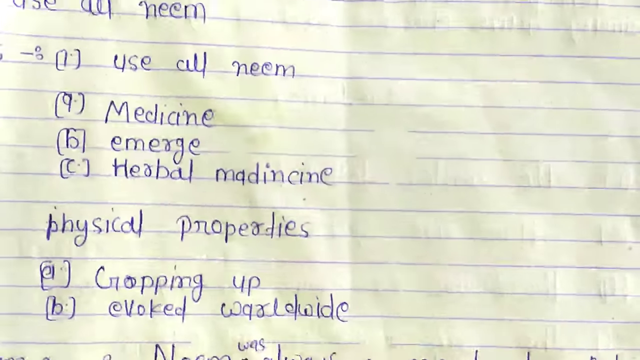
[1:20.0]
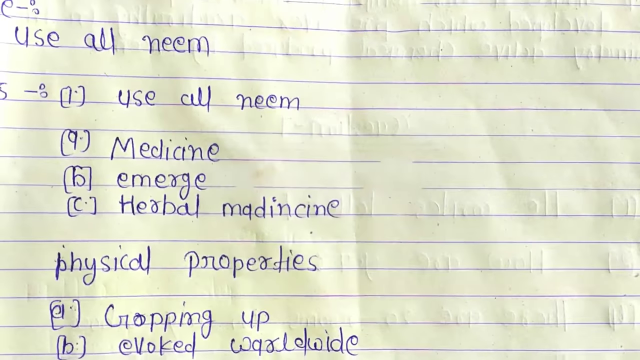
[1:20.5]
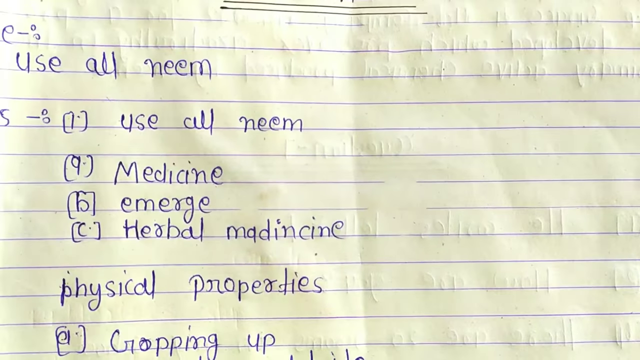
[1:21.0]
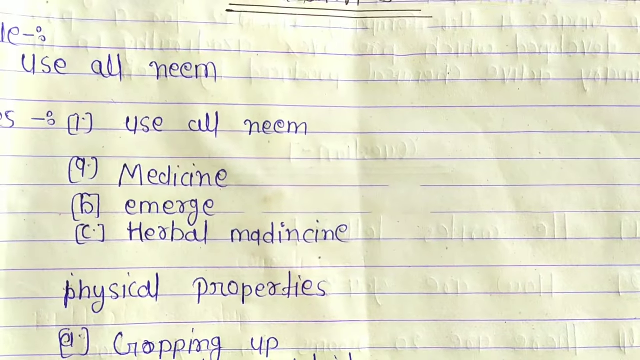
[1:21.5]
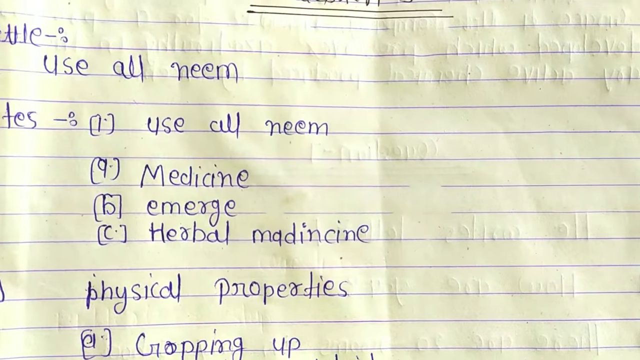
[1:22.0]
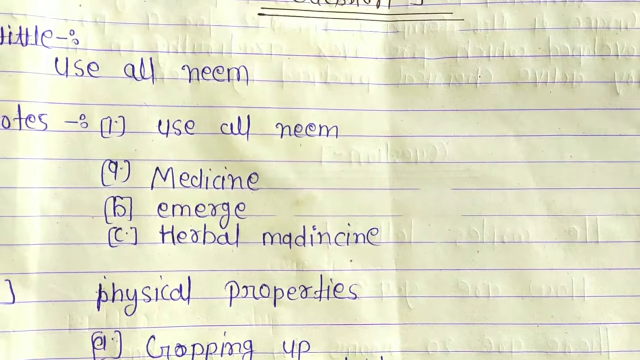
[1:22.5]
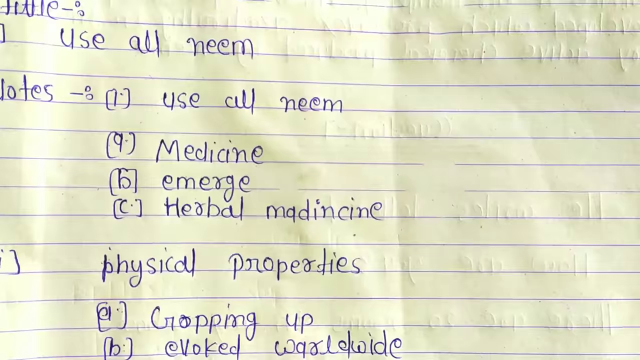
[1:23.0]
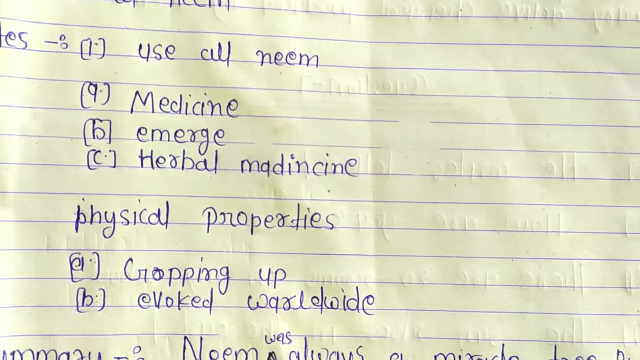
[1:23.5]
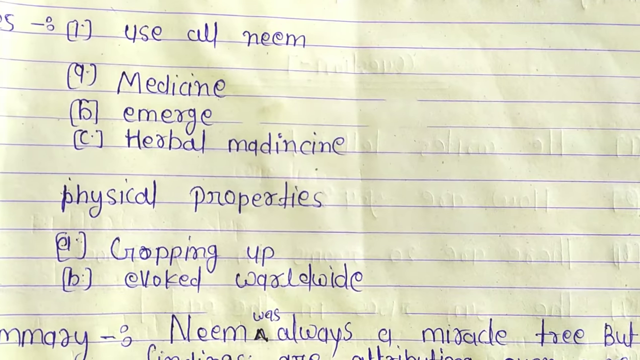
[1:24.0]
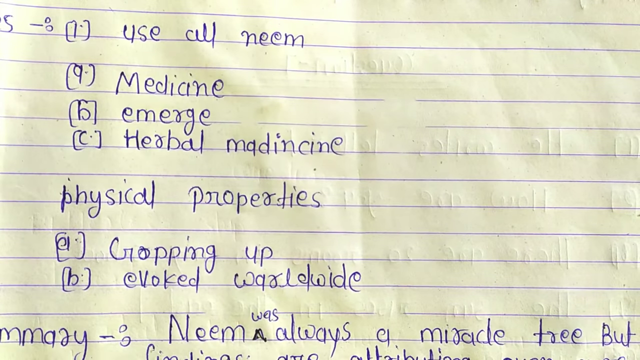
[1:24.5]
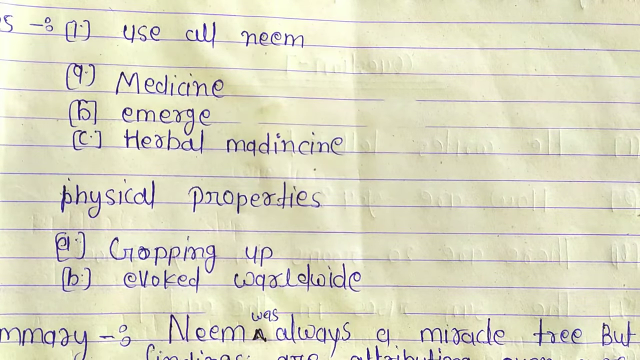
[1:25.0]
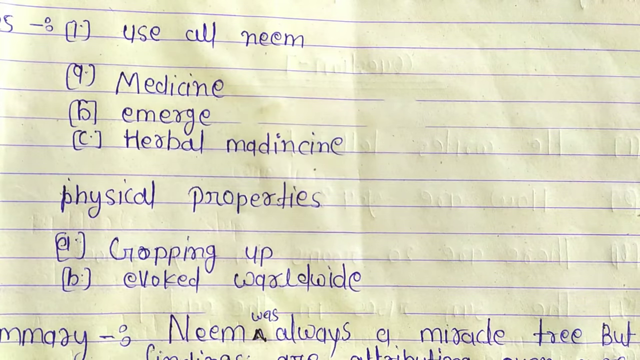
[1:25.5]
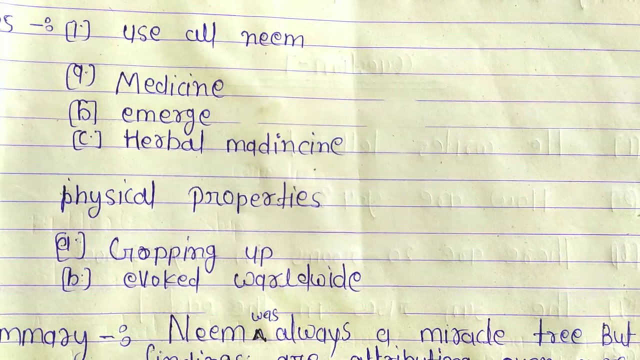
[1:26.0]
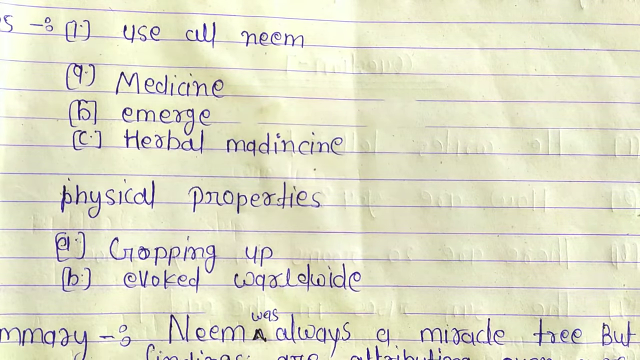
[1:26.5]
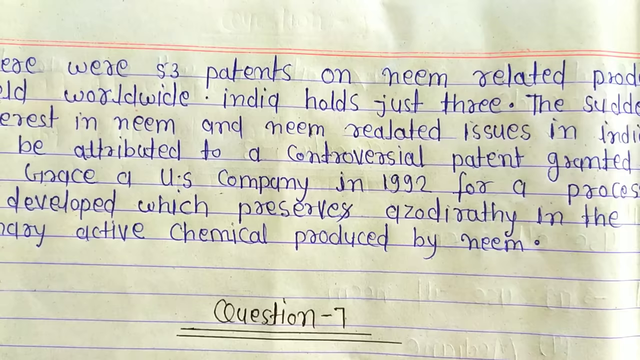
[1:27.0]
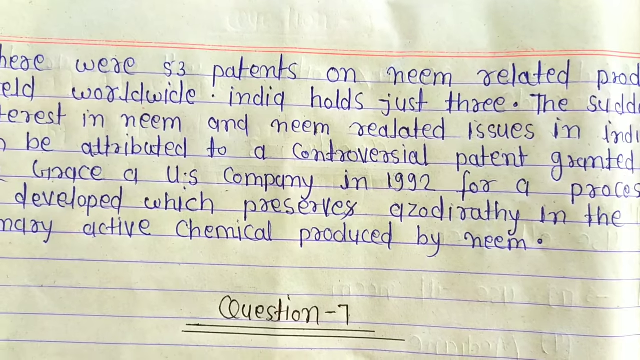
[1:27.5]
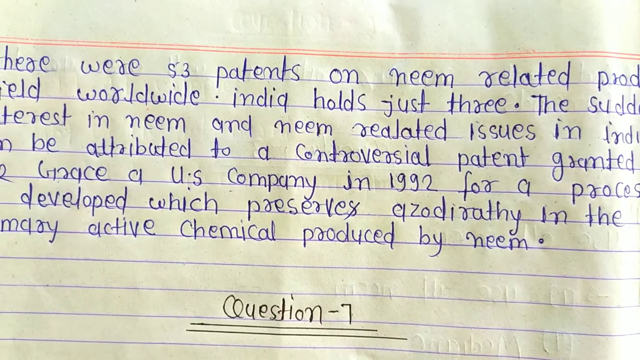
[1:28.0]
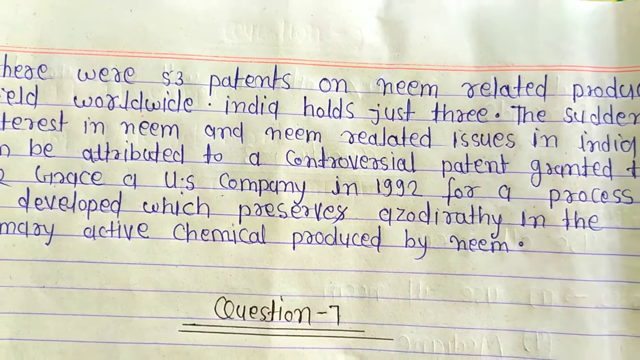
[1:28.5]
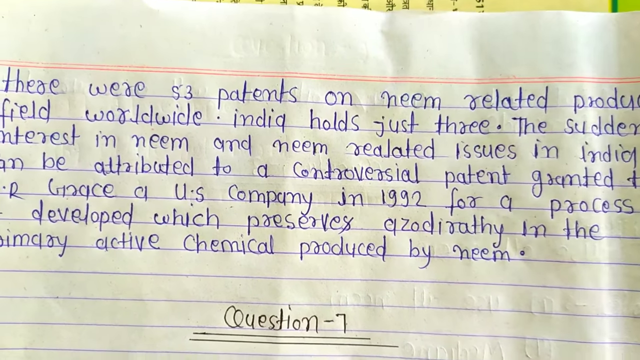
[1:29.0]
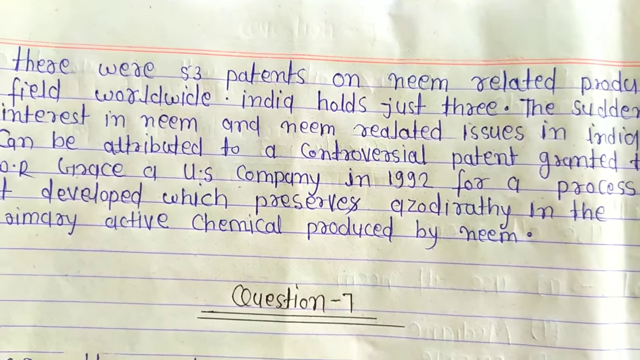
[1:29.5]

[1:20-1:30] The person moves the paper of notes around, then it stops; the original notes with "summary" are still visible. The view is zoomed in so the words can be read. The writing mentions "53 patents on neem related" and reads "worldwide india holds just three", with "india" written with a lowercase i. Part of the next line is cut off, and it continues with "neem and neem related issues", "India be attributed to a controversial patent granted", apparently "Grace, a US company, 1992", "developed which preserves", and after some cut-off words, "active chemical produced by neem".